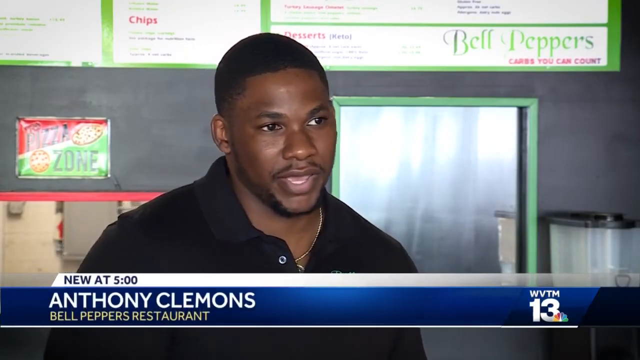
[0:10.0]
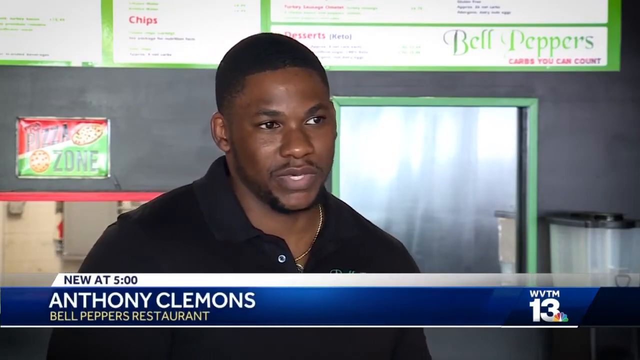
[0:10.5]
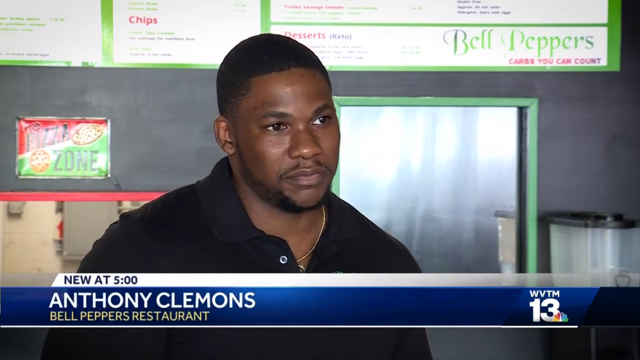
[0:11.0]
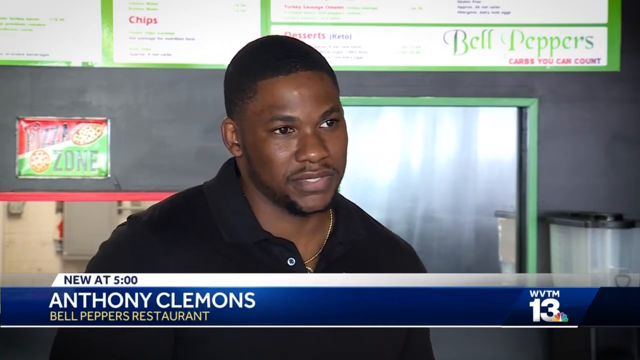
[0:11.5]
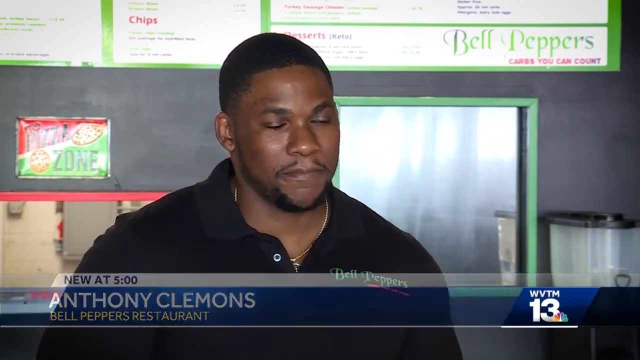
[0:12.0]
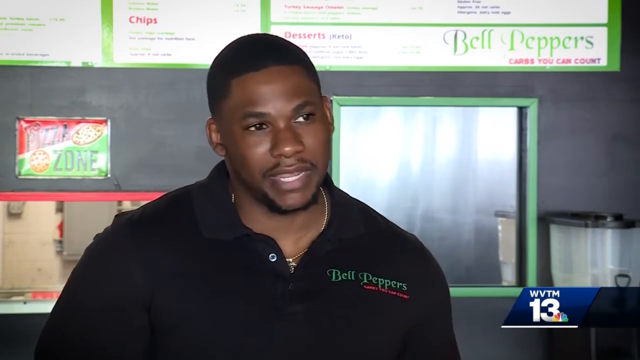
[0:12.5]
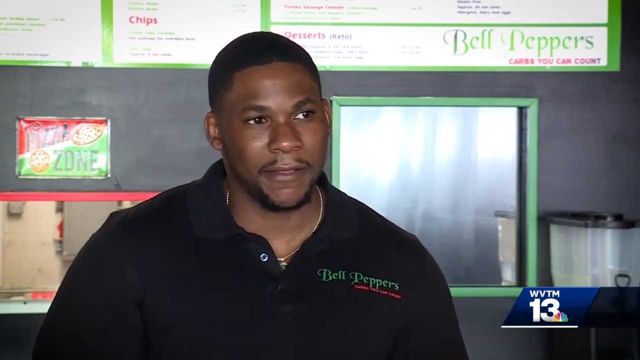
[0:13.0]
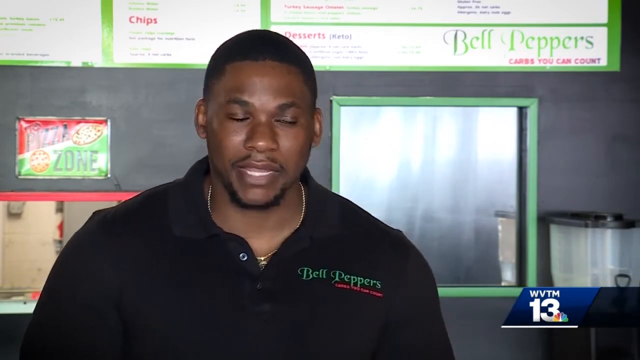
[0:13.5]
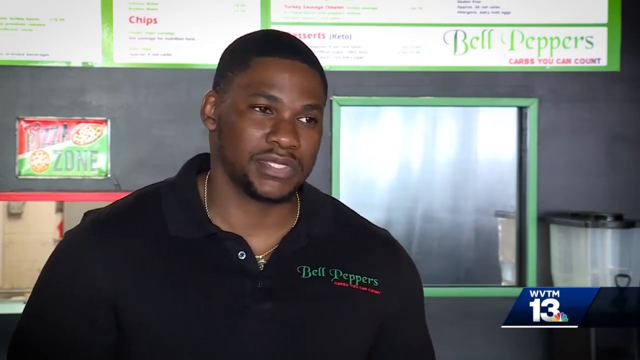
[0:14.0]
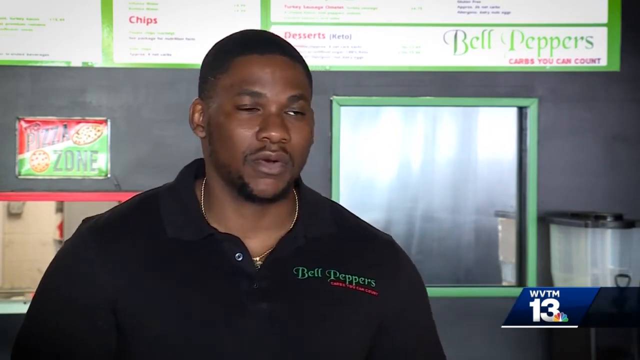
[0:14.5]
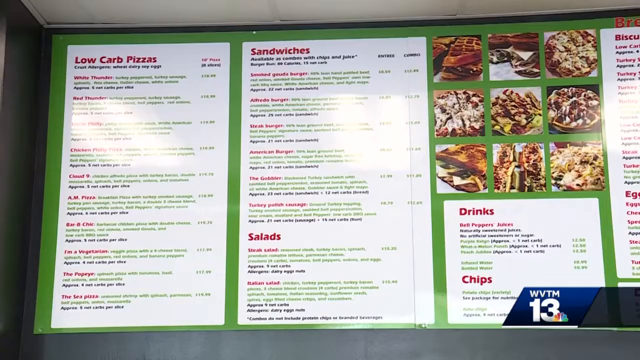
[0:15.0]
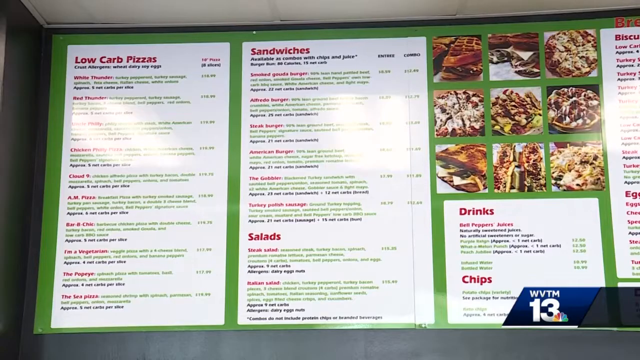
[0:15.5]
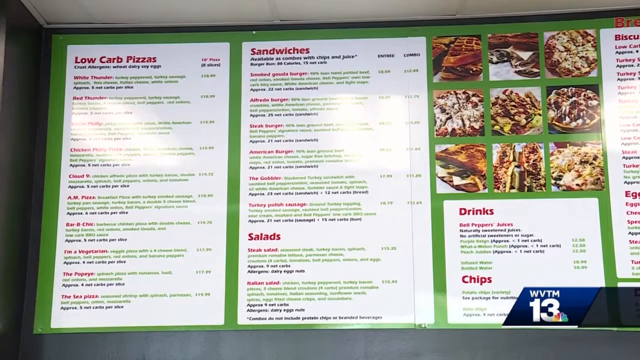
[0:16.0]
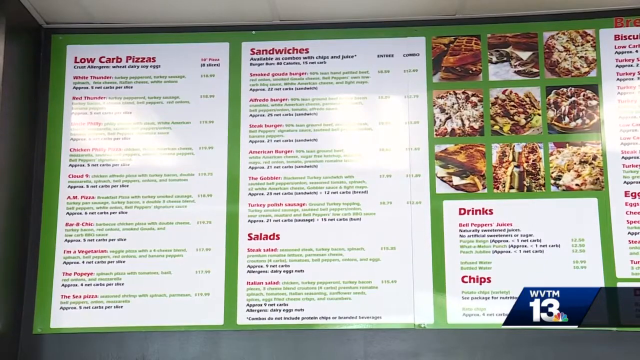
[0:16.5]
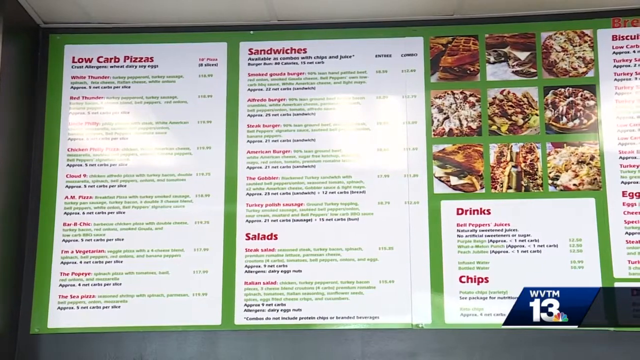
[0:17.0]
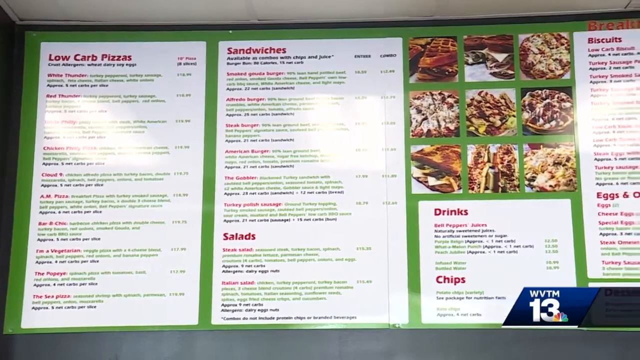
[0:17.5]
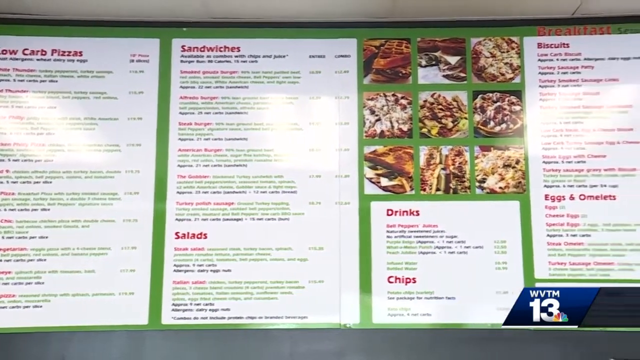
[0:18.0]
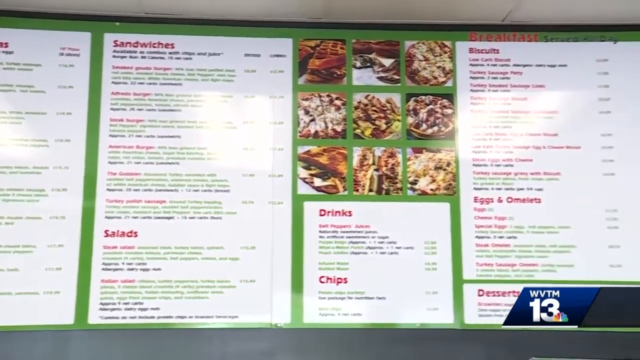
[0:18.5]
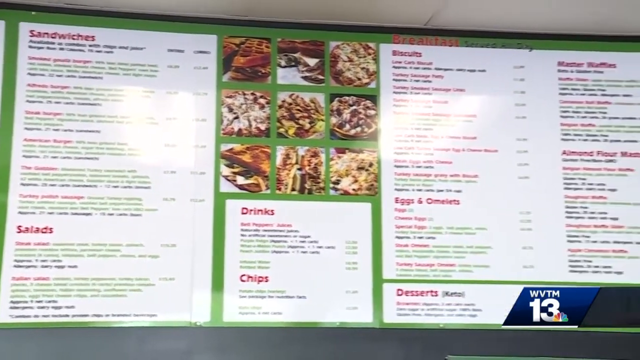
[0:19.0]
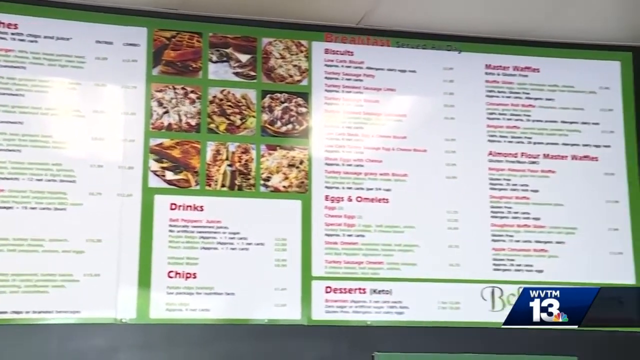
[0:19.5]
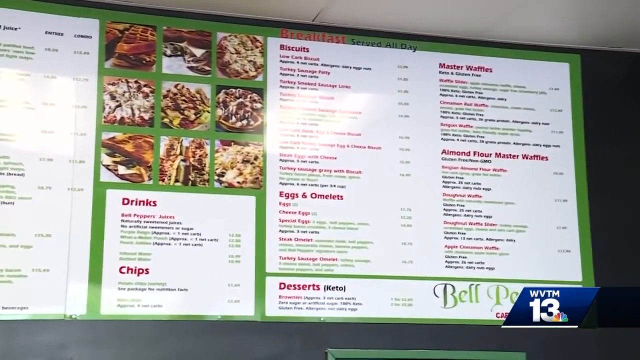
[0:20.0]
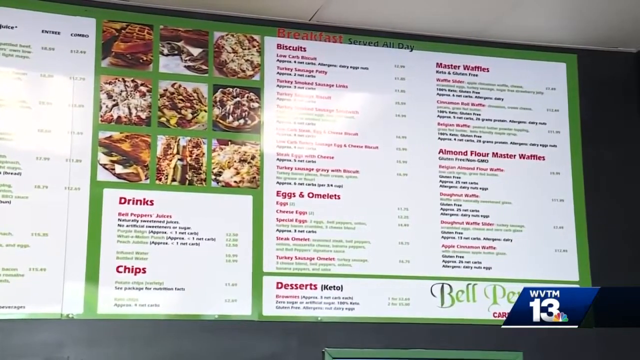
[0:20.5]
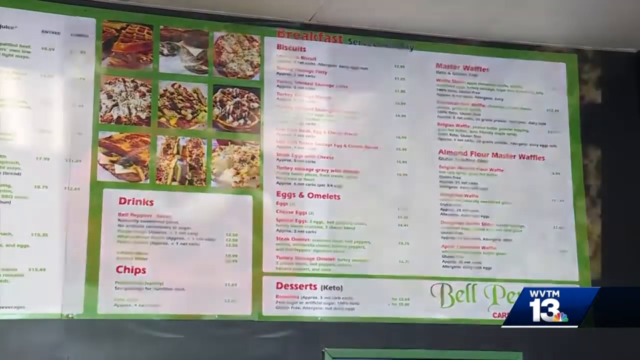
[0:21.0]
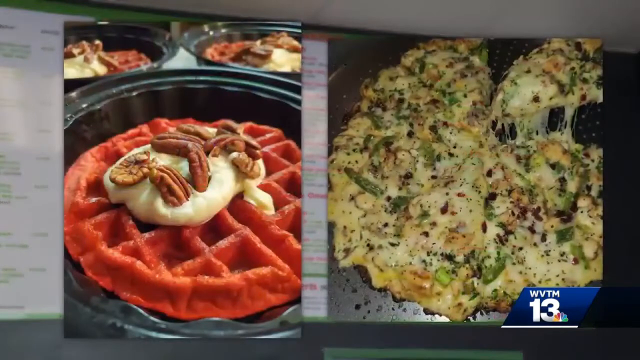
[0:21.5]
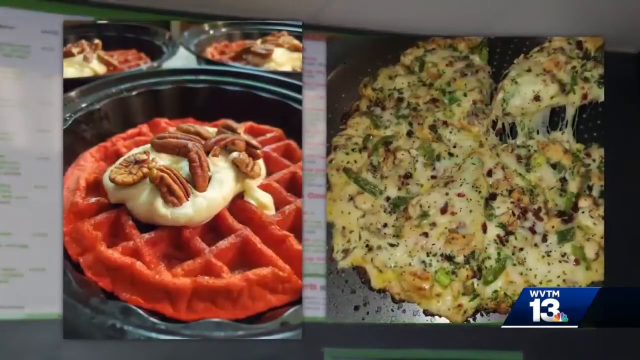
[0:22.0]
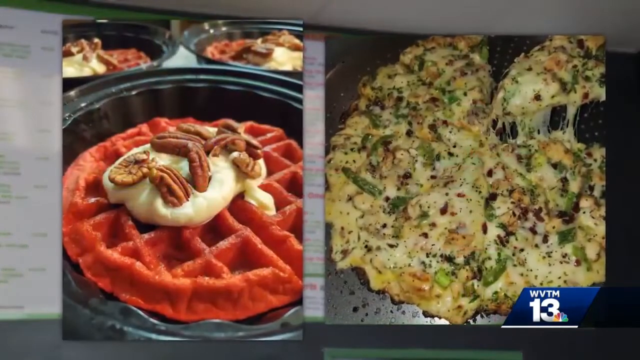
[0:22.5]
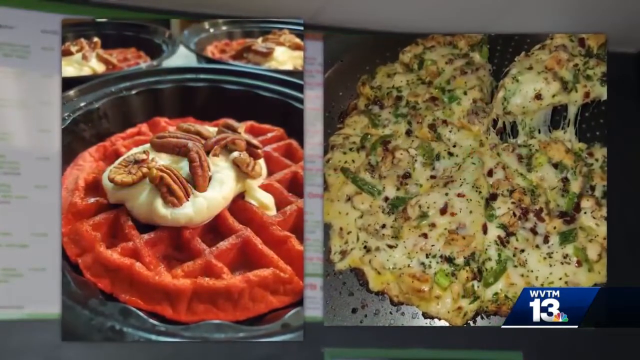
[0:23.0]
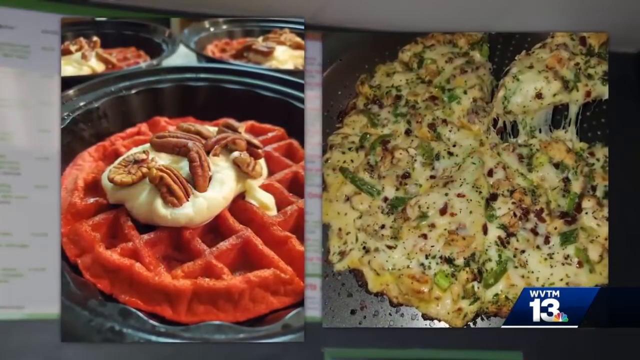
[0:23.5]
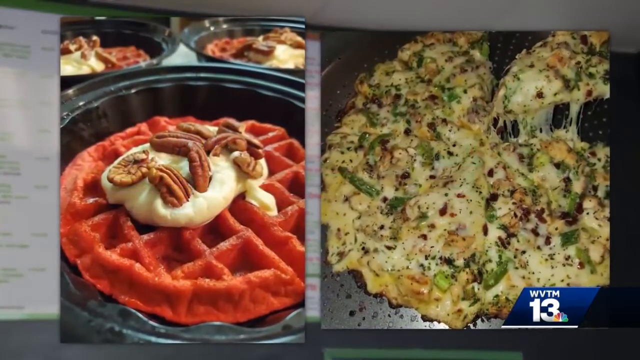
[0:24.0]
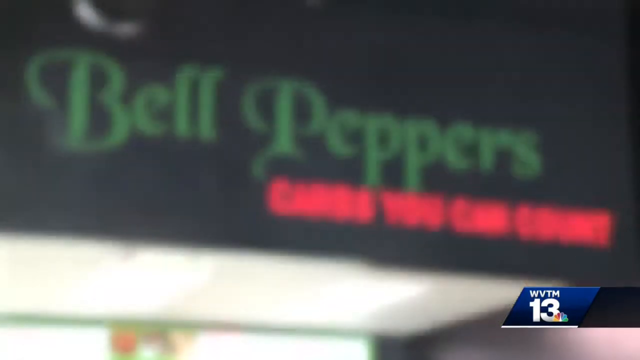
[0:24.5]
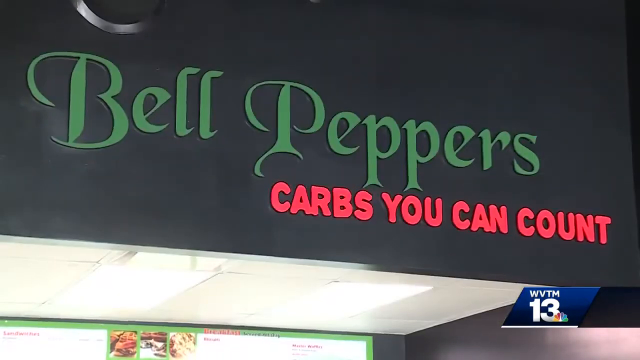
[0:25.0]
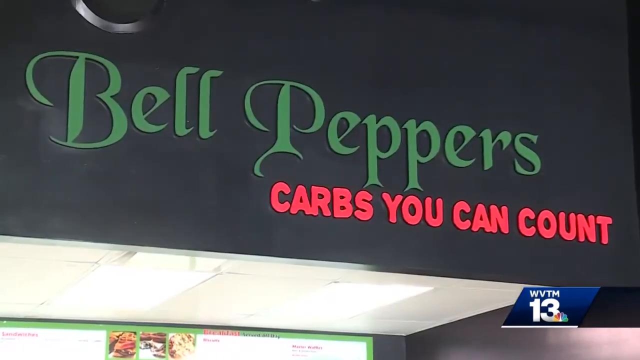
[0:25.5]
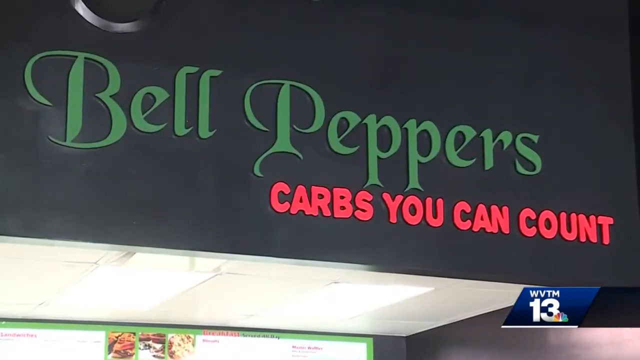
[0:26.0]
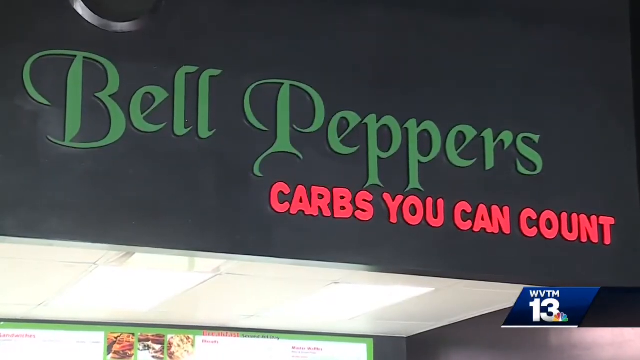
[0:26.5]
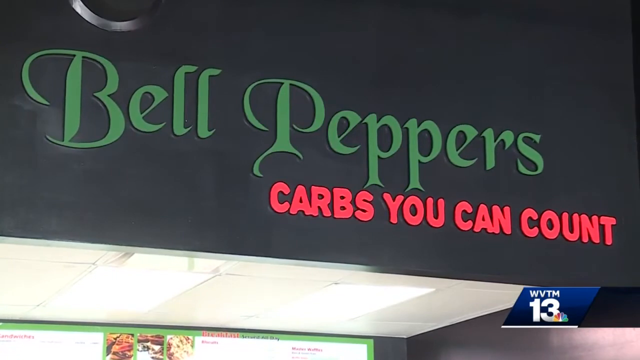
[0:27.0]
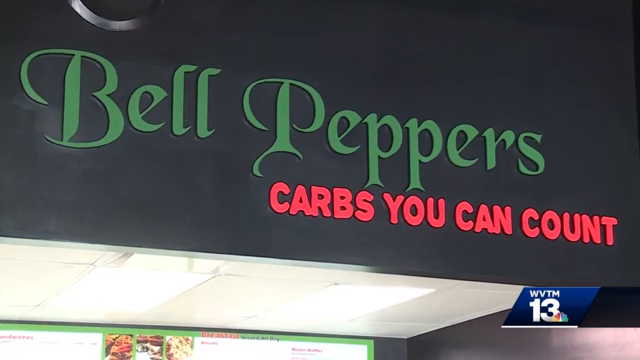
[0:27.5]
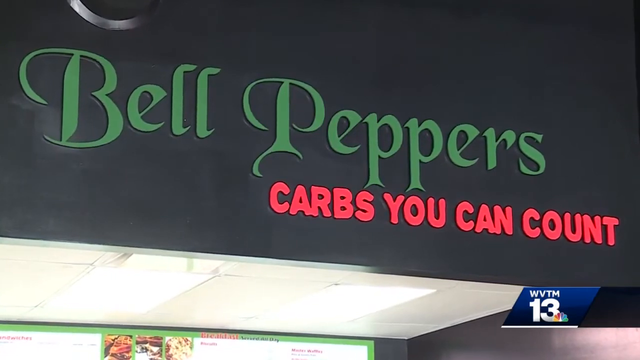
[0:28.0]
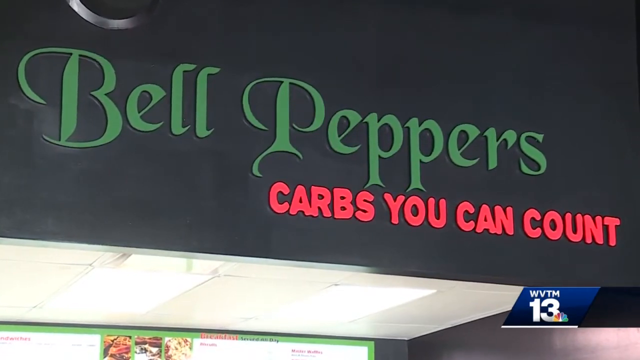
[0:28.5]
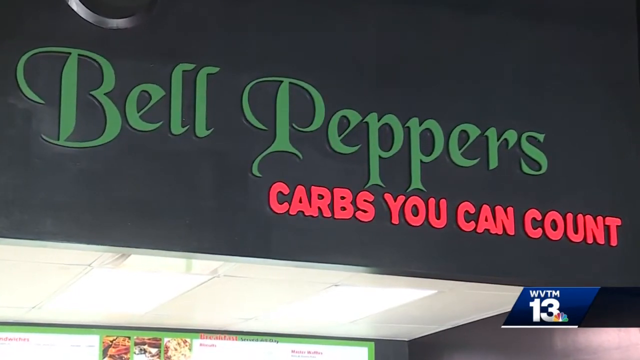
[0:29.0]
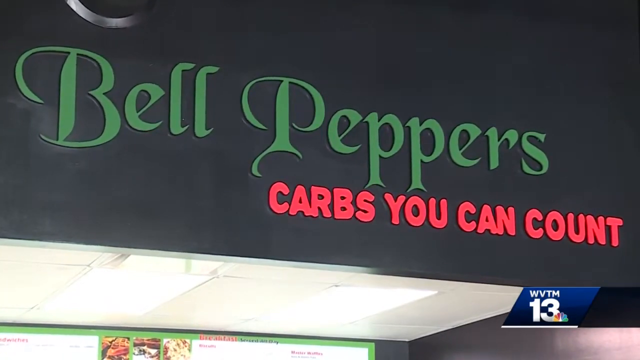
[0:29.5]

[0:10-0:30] Anthony Clemens stands behind the counter in the restaurant while giving the interview. The video shows different low-carb pizzas, sandwiches, salads, drinks, chips and other unique items, such as red waffles with pecans. Text reads "Bell peppers, carbs you can count." The place is probably a restaurant that focuses on healthier options.